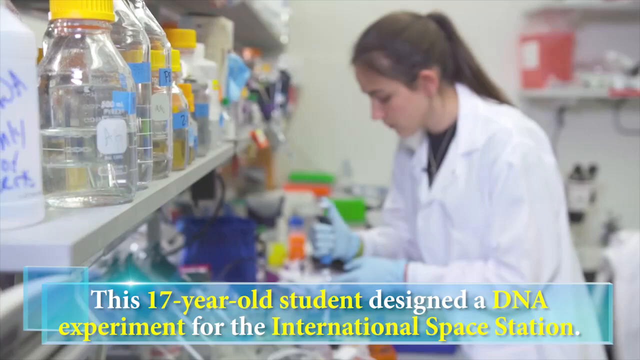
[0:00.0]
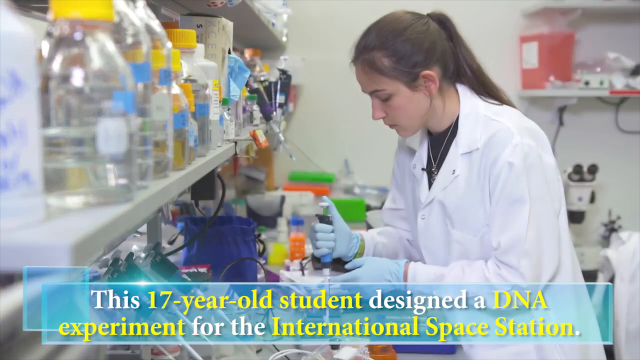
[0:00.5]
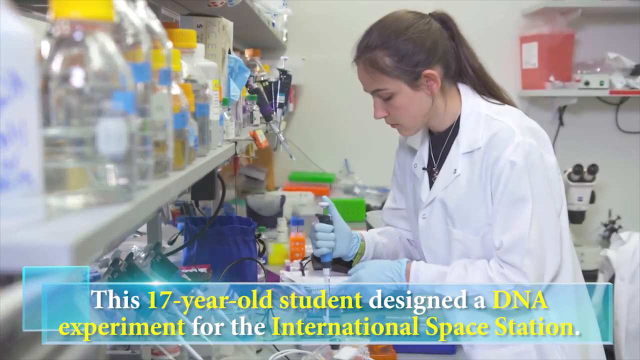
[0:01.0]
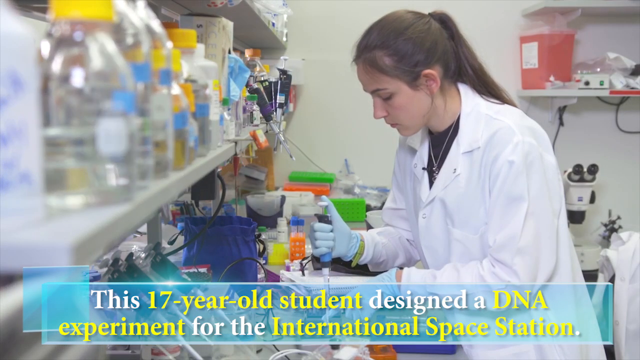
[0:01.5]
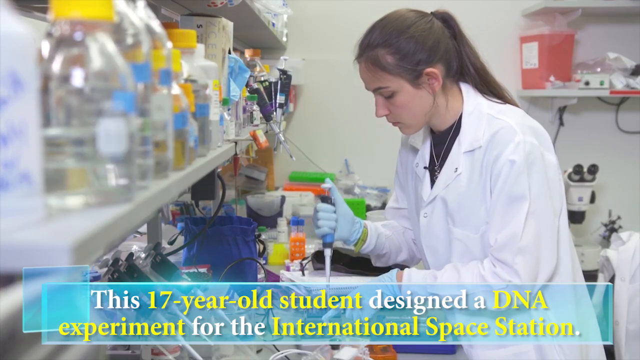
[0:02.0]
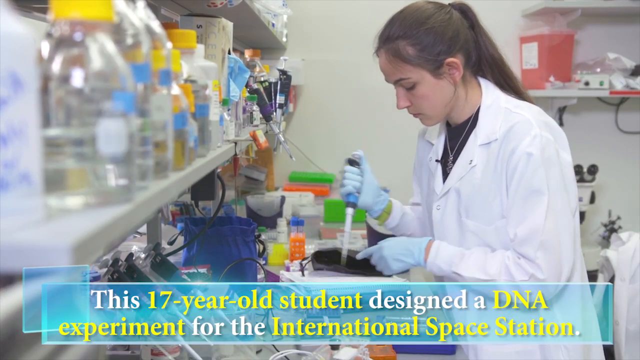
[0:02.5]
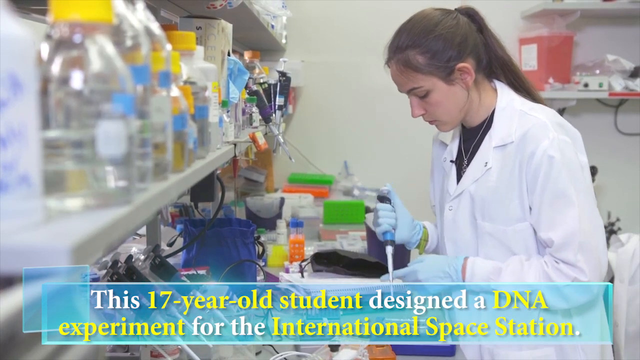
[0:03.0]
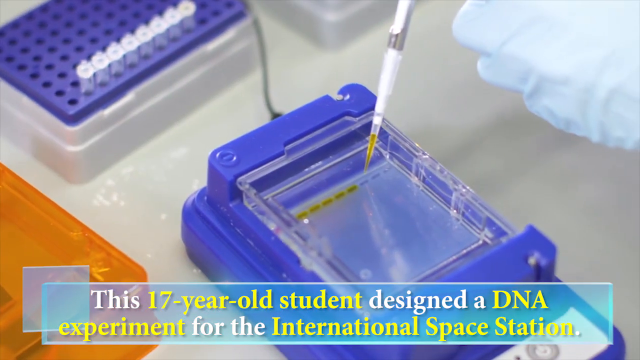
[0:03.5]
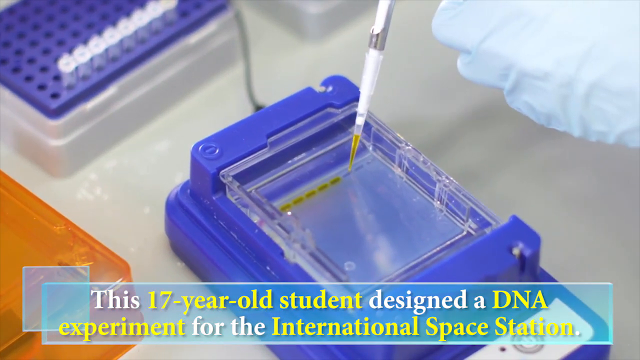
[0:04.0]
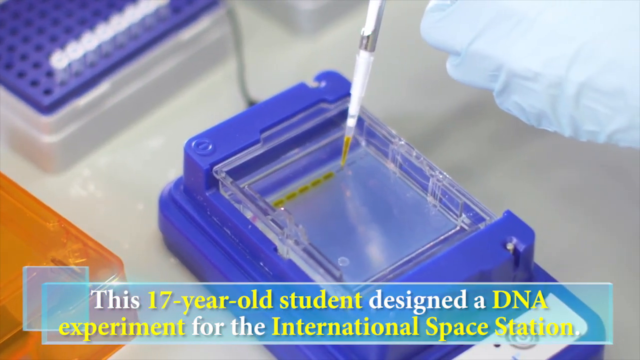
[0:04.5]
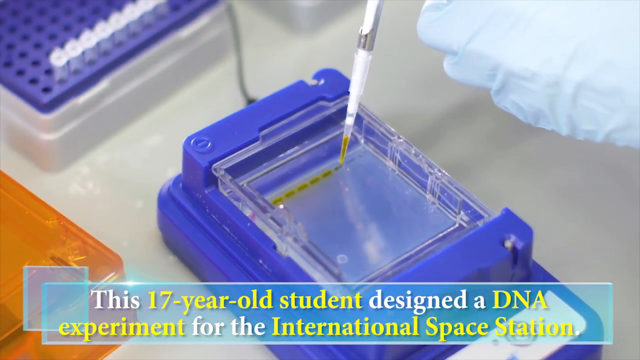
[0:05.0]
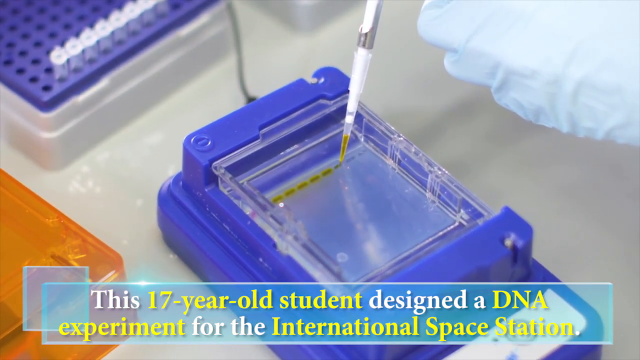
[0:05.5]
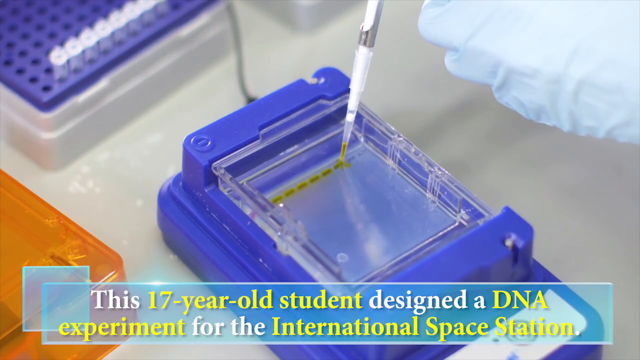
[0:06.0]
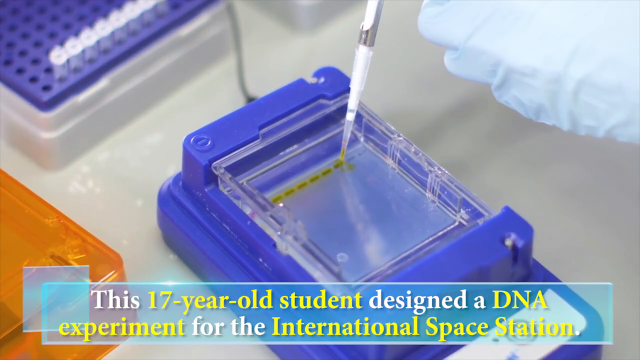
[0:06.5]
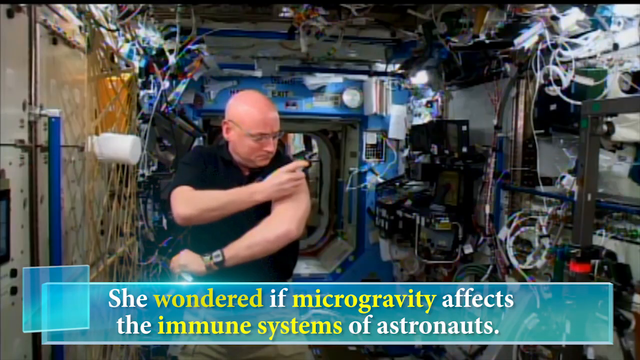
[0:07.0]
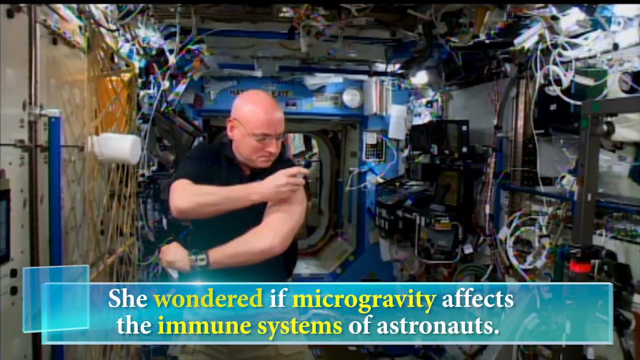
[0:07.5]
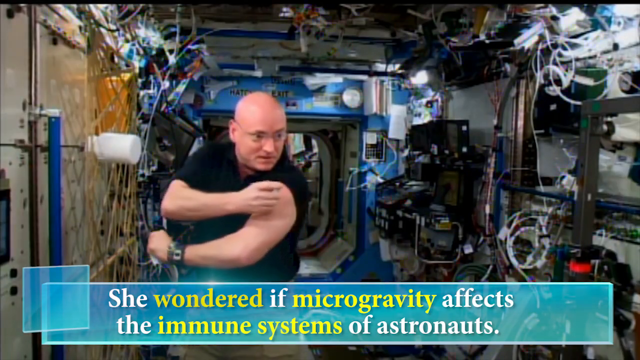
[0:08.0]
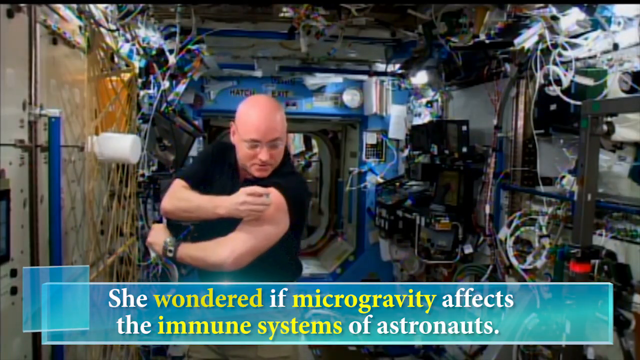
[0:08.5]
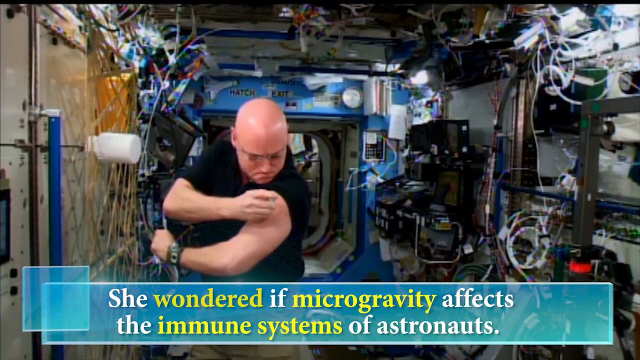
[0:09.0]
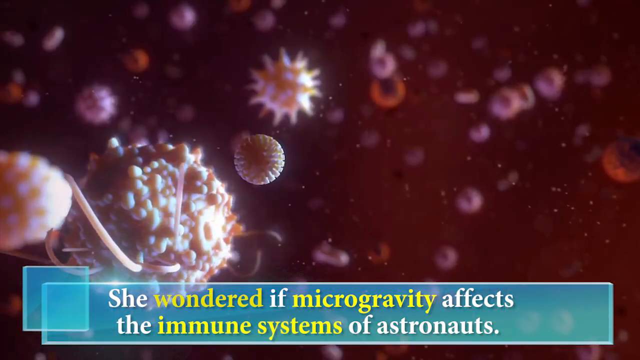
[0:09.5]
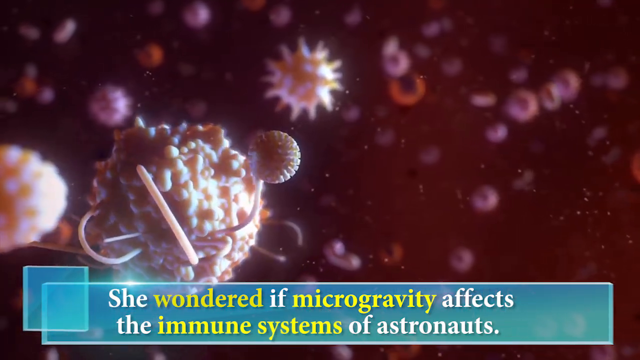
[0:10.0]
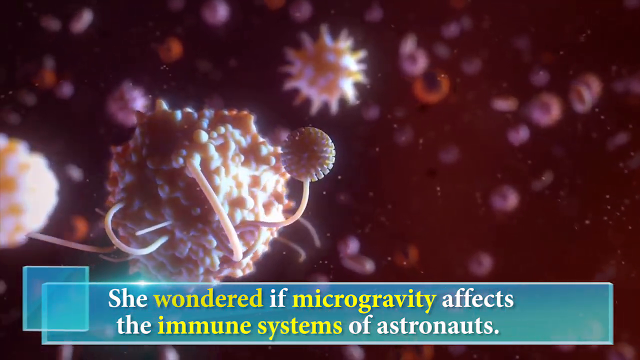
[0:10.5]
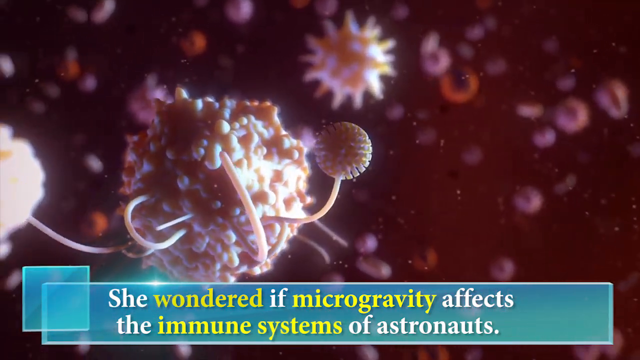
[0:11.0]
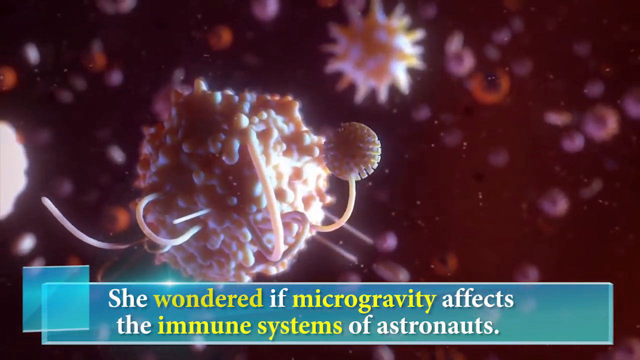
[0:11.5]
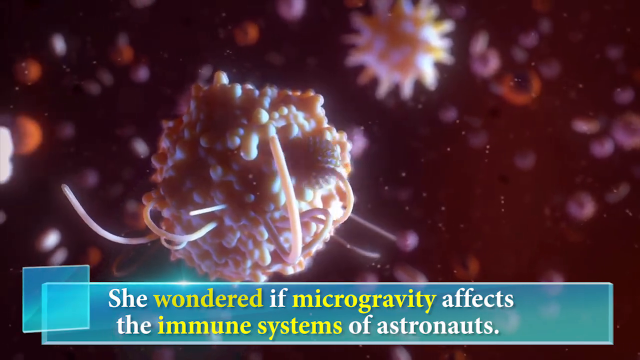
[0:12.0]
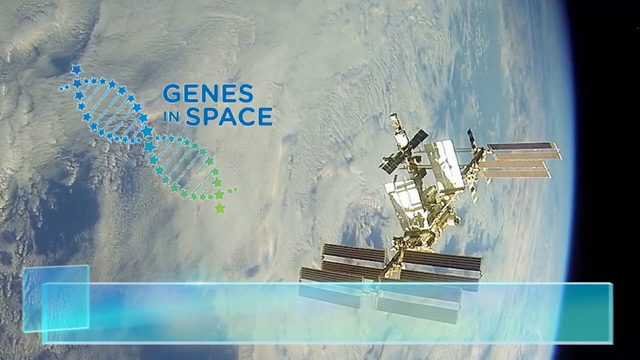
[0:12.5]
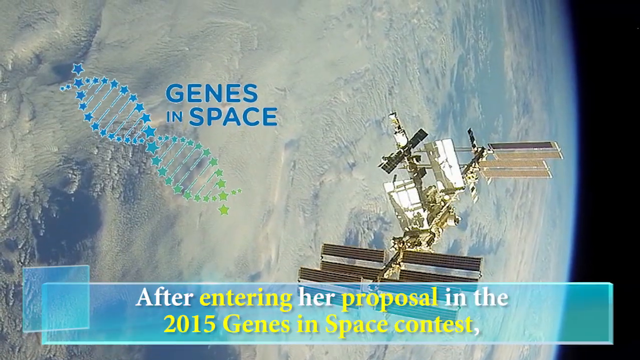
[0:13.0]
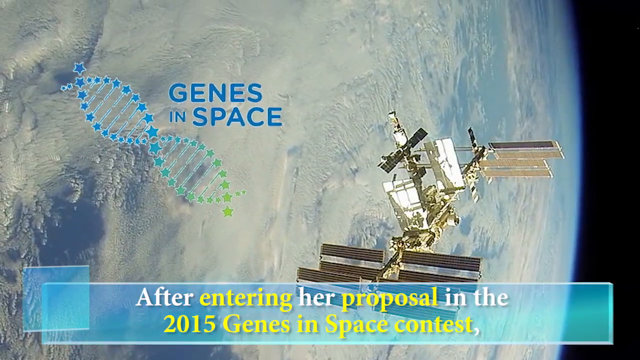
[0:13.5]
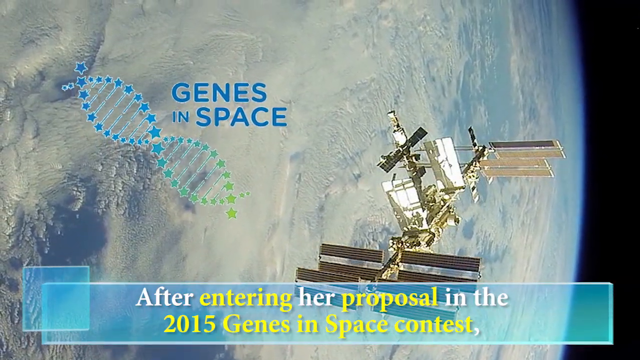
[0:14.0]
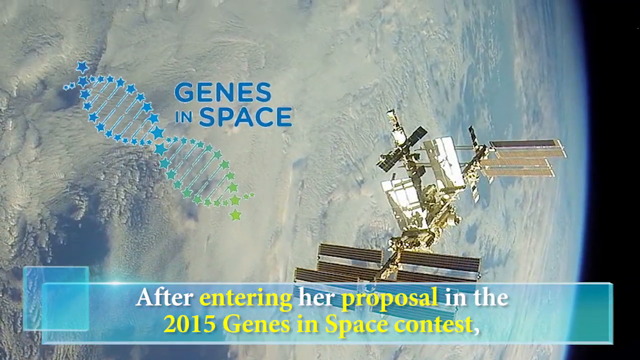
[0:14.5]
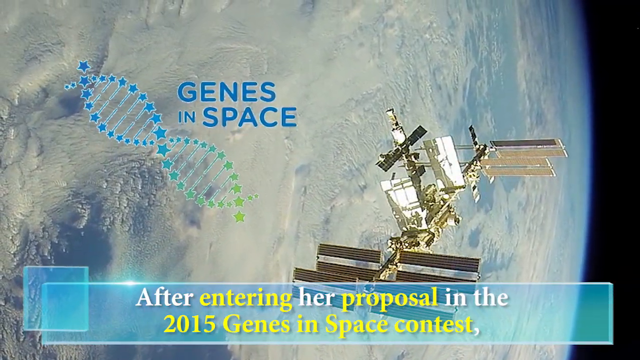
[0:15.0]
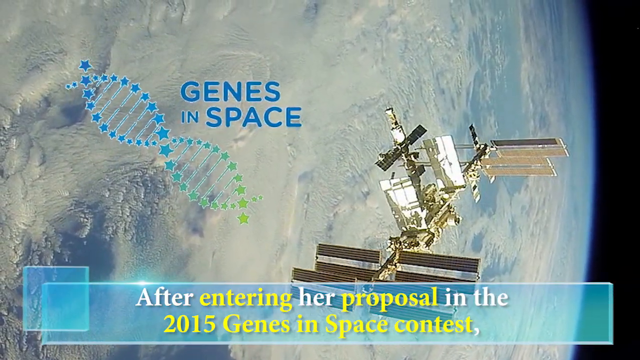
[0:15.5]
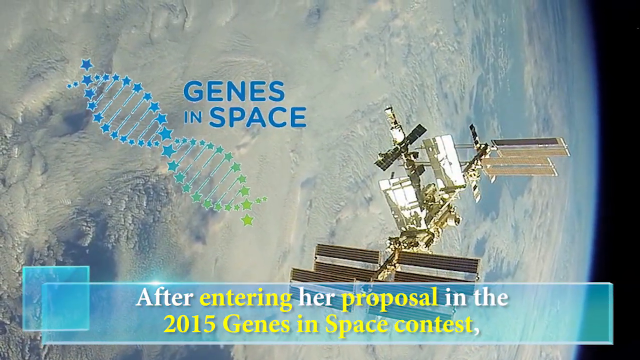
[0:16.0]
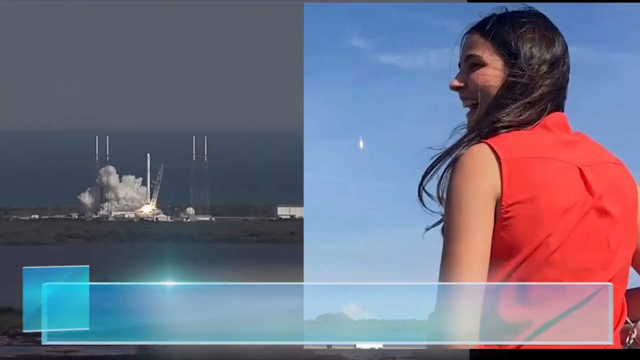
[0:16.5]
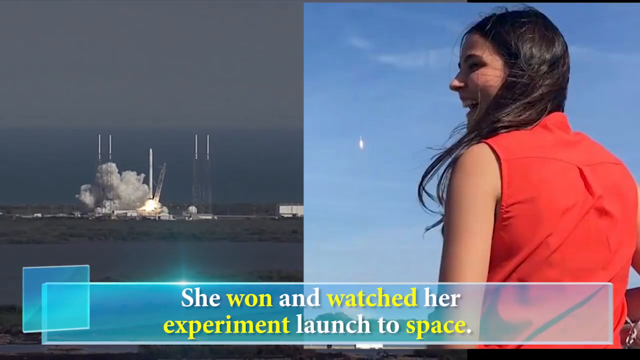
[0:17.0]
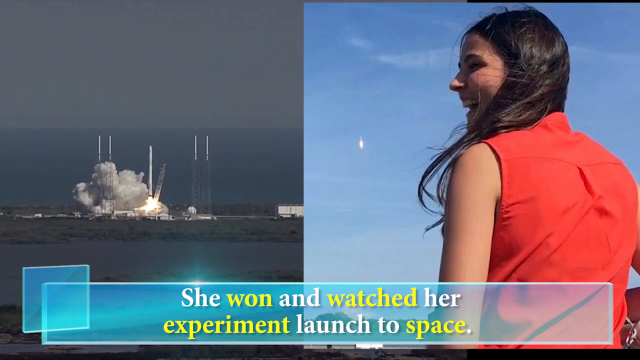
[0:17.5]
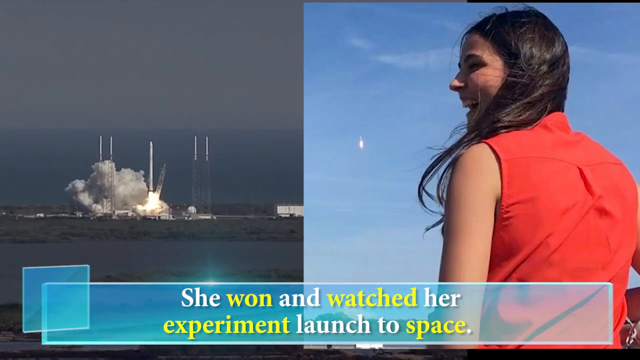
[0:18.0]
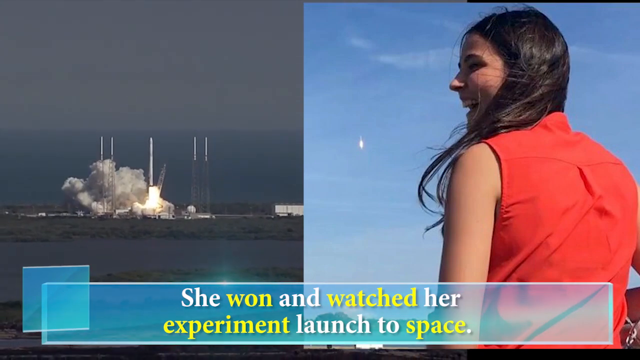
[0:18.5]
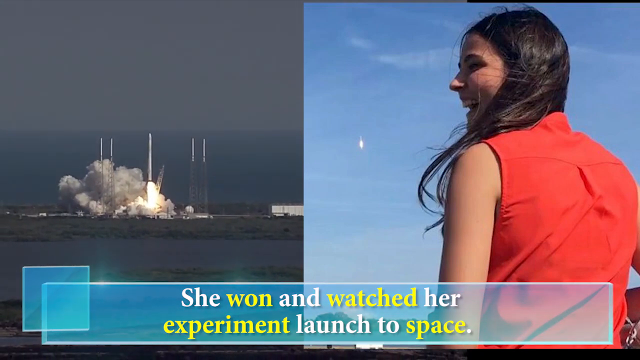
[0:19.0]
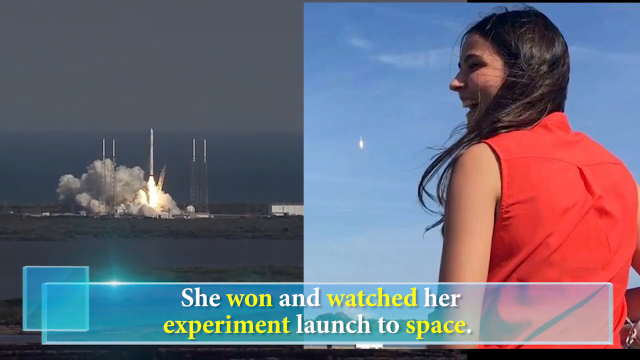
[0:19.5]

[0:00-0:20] A woman in a white jacket, her hair pulled back in a ponytail, appears to be in a lab, with equipment surrounding her and the background slightly blurred. A blue banner with white and yellow text reads "this 17-year-old student designed a DNA experiment for the International Space Station." She puts a yellow fluid into a clear plastic container. The video transitions to another screen with text reading "she wondered if microgravity affects the immune systems of astronauts." A man stands in a kind of outer space setting, kind of touching his arm as if doing something with it. Next comes what looks to be bacteria from the immune system, with an orange thing that kind of puts something inside it. Blue bolded text reads "genes in space," and an object floats in the sky next to Earth. More white and yellow text reads "after entering her proposal in the 2015 Genes in Space Contest, she won and watched her experiment launch to space." A picture shows her laughing and smiling, looking kind of happy and proud. Then something launches into the air with smoke and fire coming out of it.